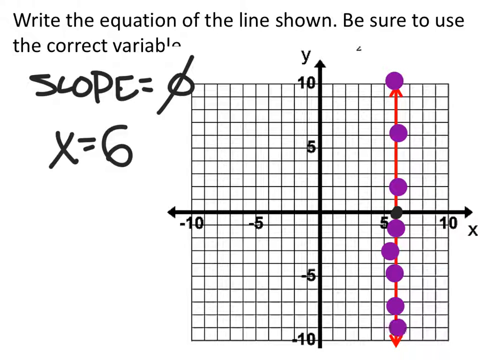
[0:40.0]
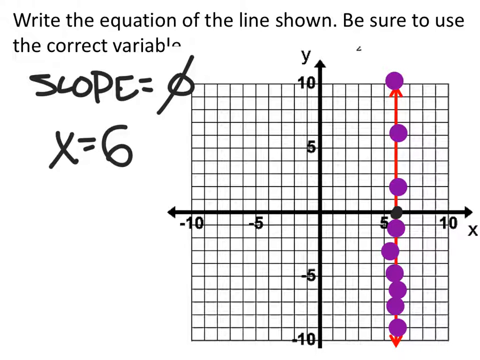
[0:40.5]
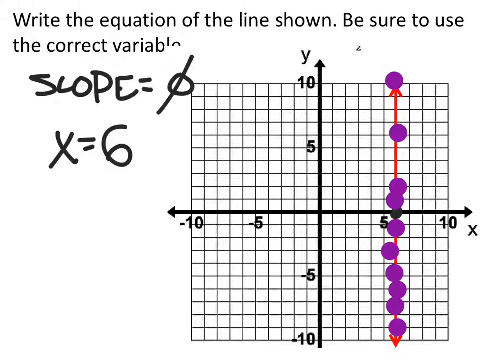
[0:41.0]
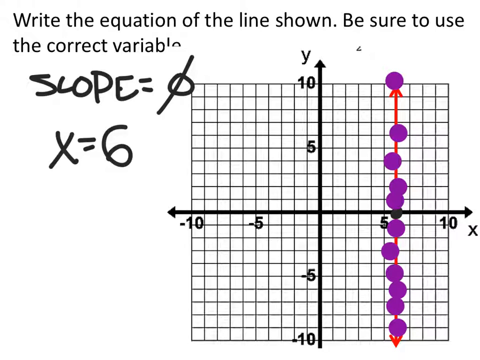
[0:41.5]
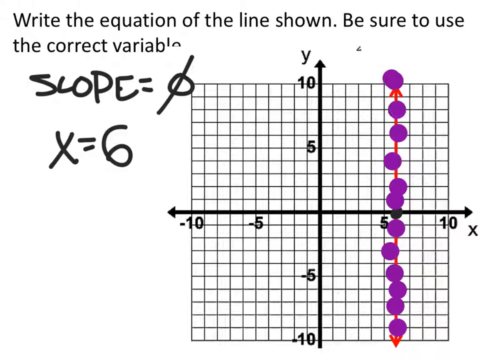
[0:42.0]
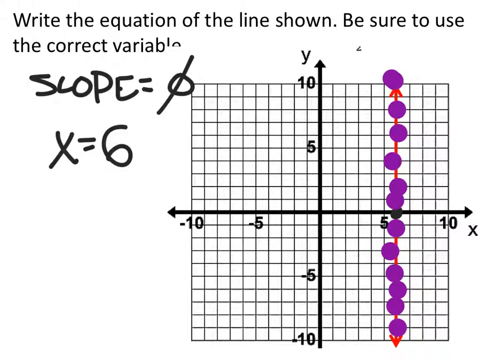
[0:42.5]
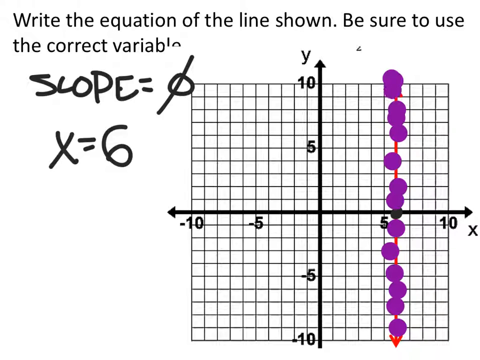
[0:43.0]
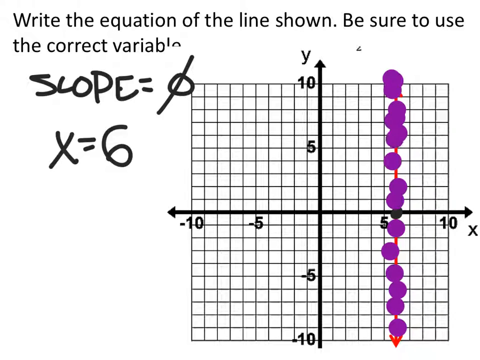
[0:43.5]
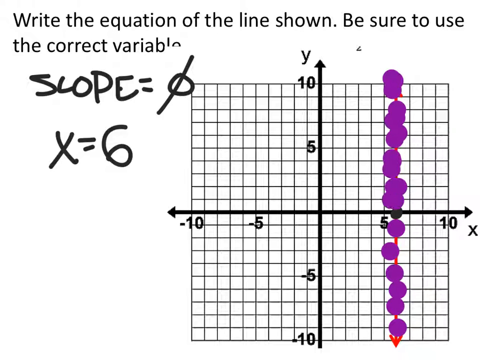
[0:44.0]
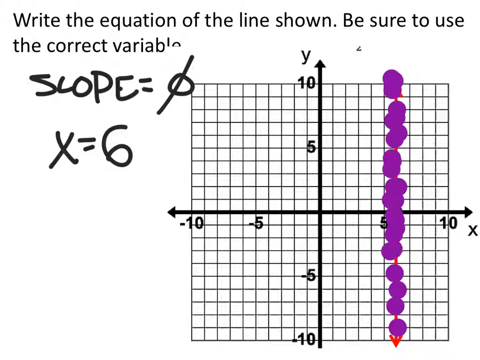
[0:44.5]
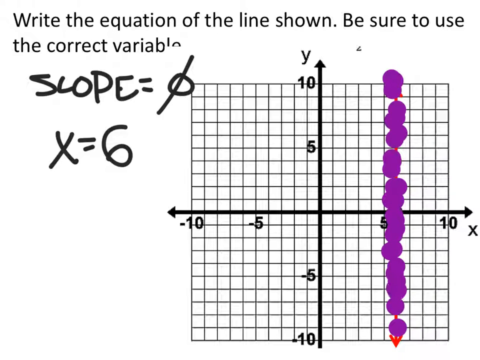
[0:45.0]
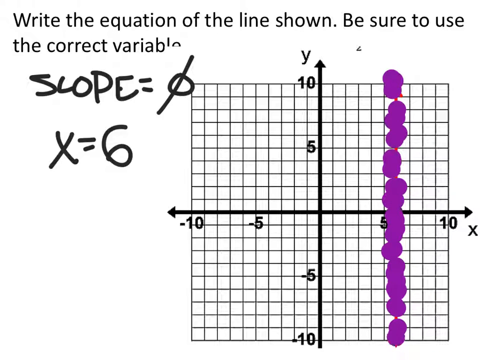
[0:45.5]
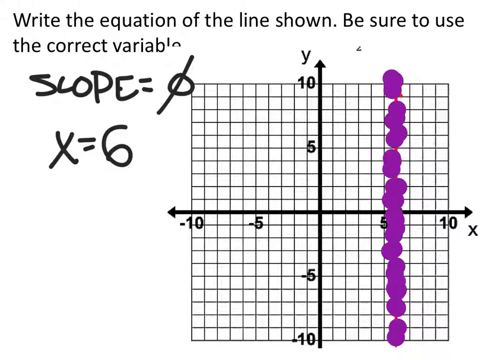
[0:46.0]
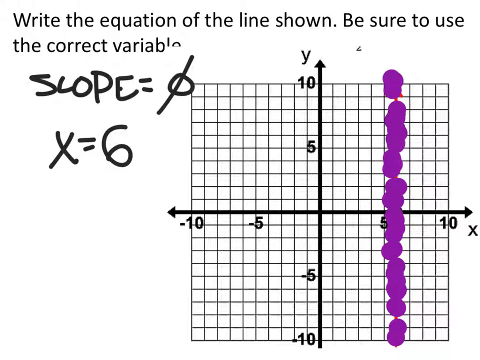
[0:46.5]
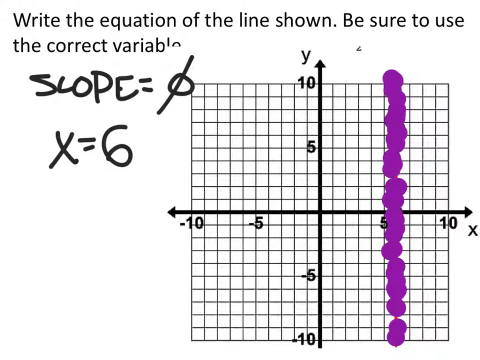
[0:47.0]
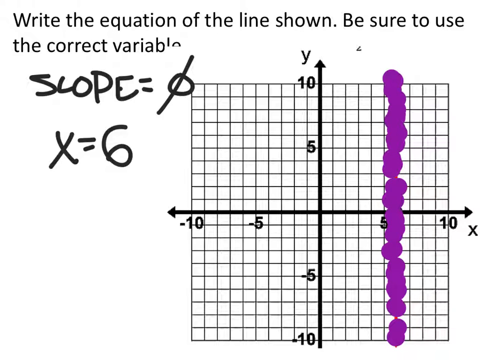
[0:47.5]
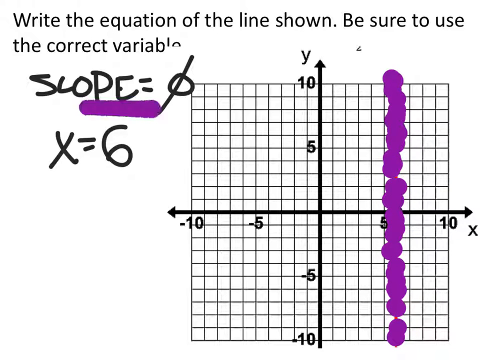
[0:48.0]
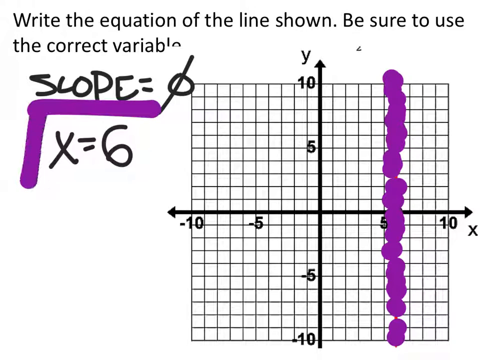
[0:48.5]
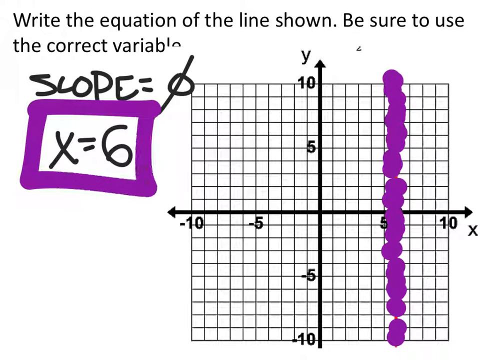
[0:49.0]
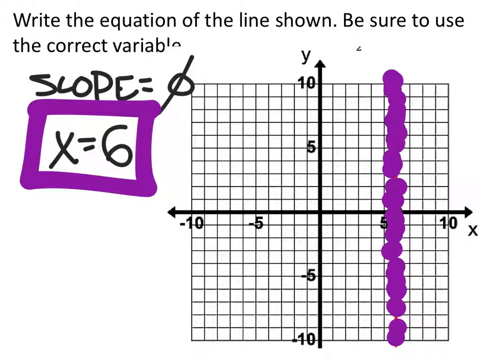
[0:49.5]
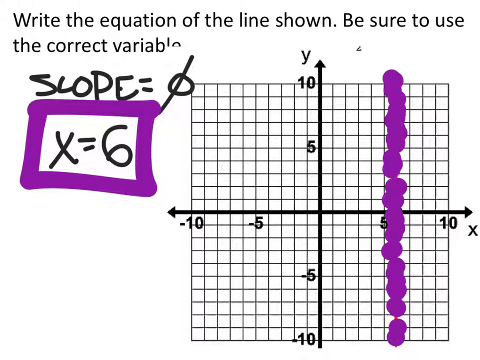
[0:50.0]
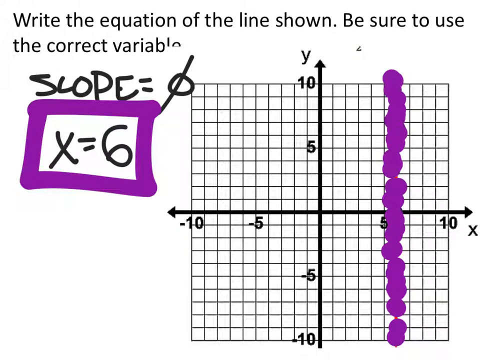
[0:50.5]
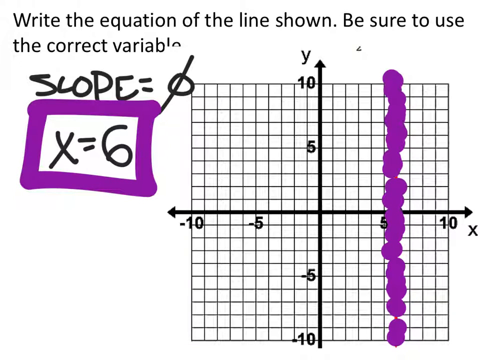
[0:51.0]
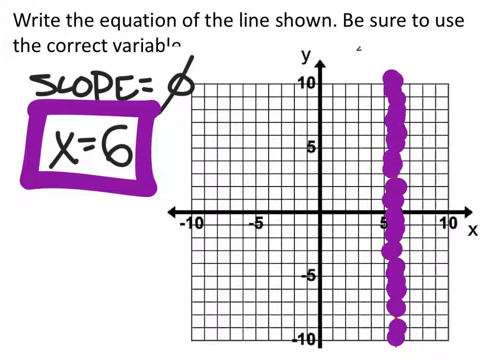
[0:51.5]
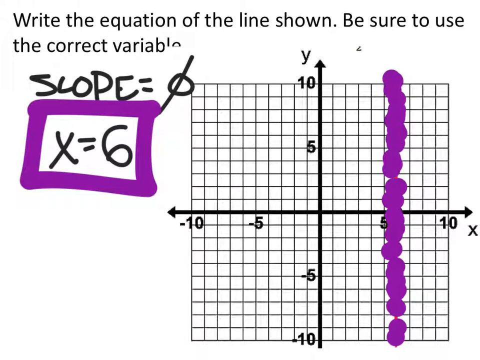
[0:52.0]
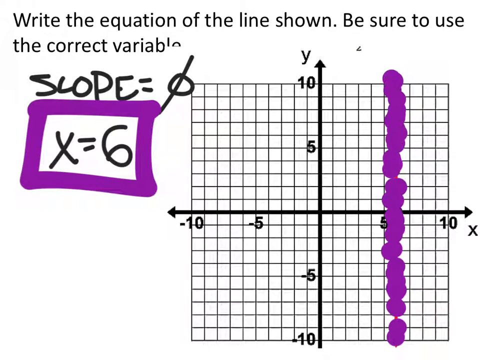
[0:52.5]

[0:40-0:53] The same example continues on the same graph of small lines, divided into four by black arrows labeled Y and X. A red arrow is on the graph, and purple color has been put over it, apparently to hide it. A box is drawn around x = 6, highlighted in purple pen. The instruction to write the equation of the line shown and be sure to use correct variables is visible.